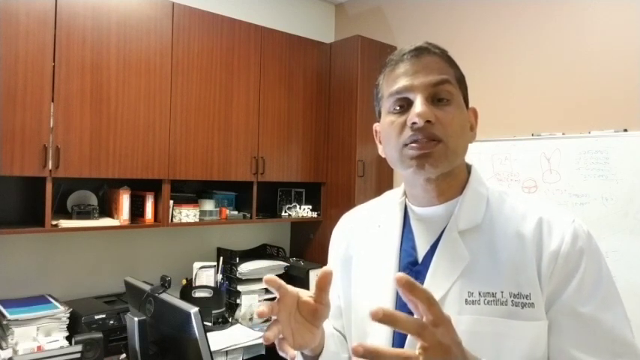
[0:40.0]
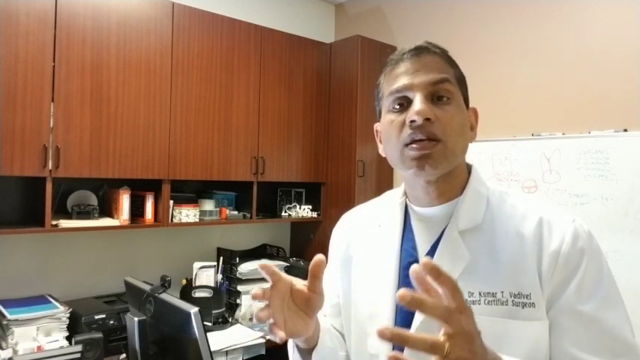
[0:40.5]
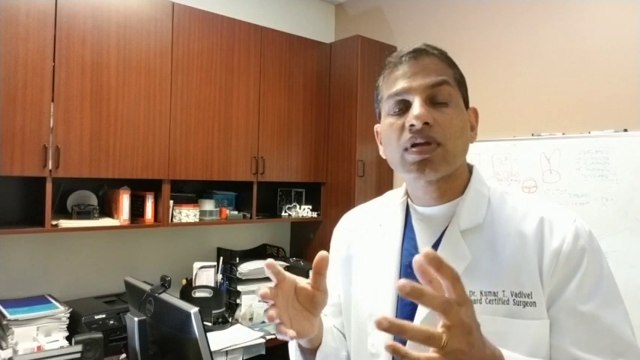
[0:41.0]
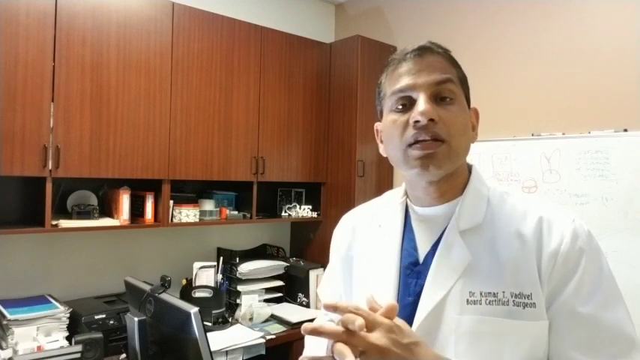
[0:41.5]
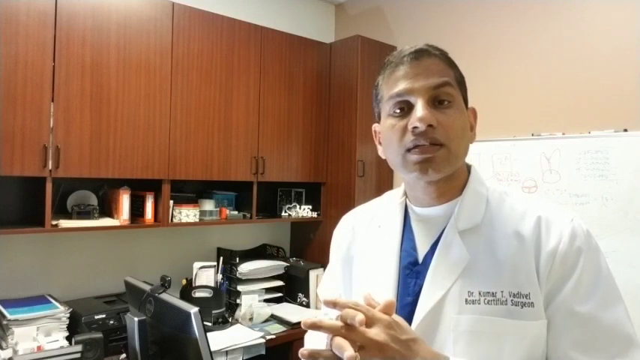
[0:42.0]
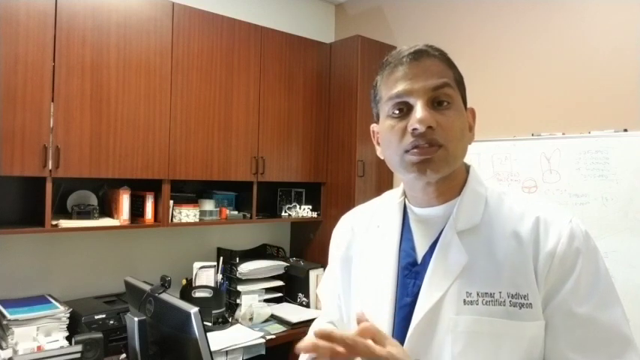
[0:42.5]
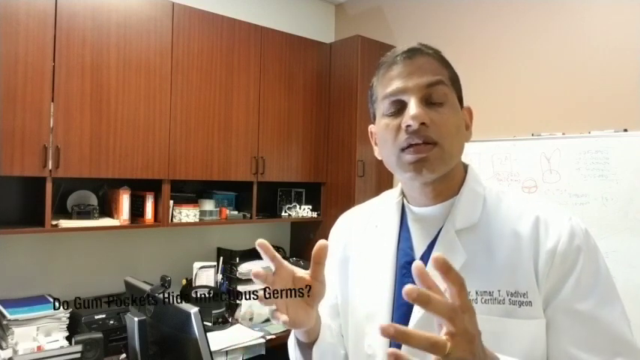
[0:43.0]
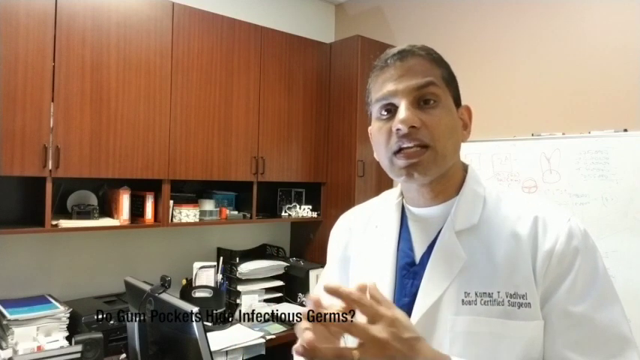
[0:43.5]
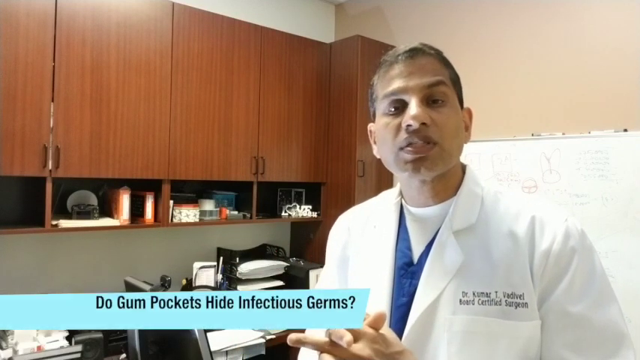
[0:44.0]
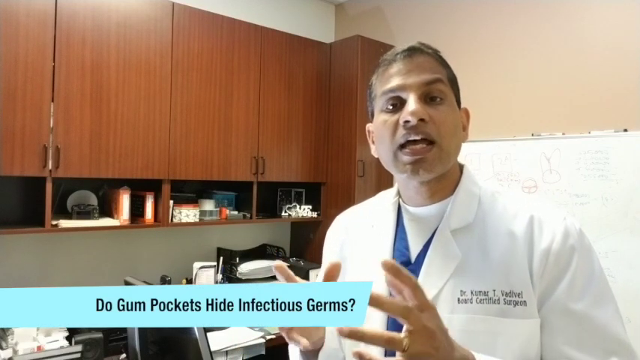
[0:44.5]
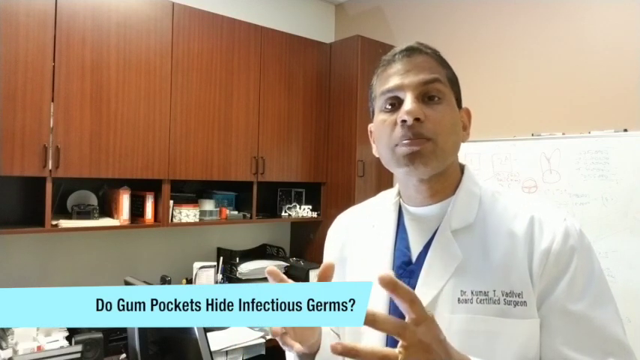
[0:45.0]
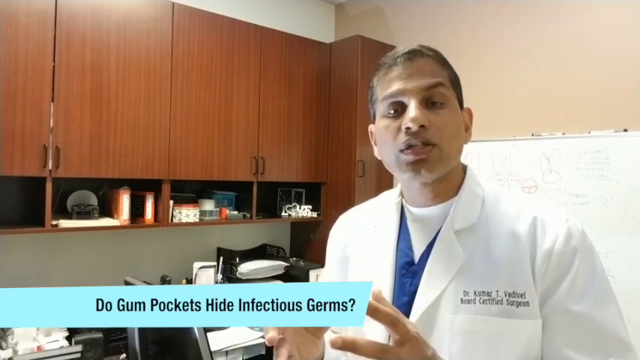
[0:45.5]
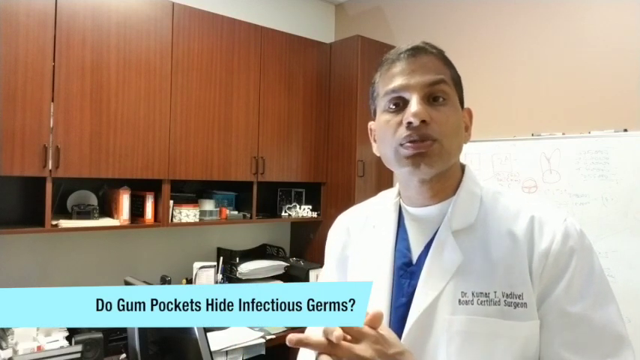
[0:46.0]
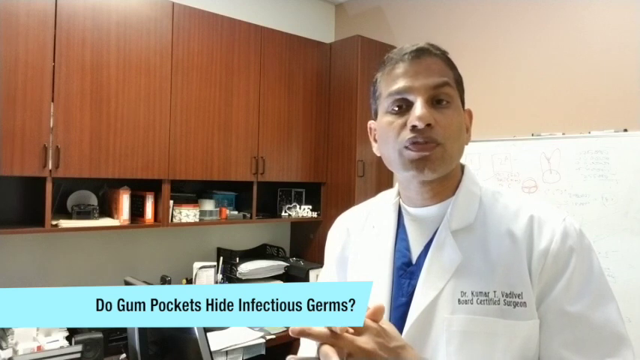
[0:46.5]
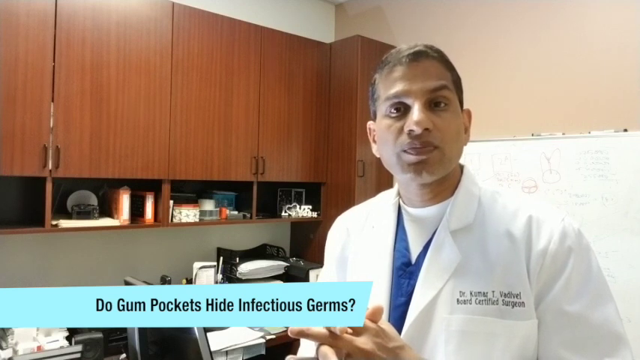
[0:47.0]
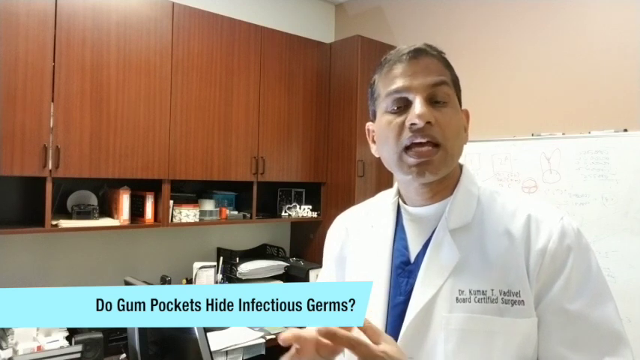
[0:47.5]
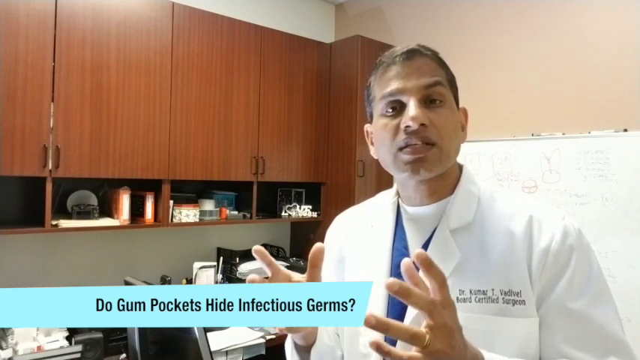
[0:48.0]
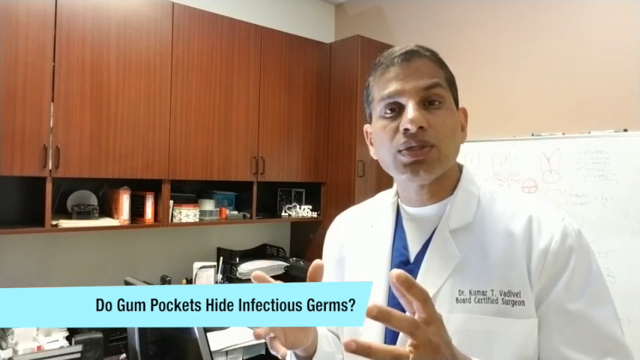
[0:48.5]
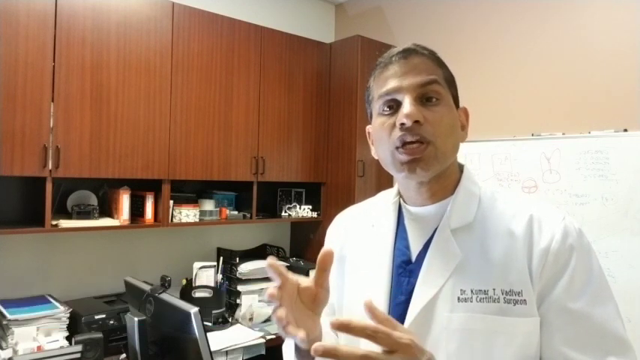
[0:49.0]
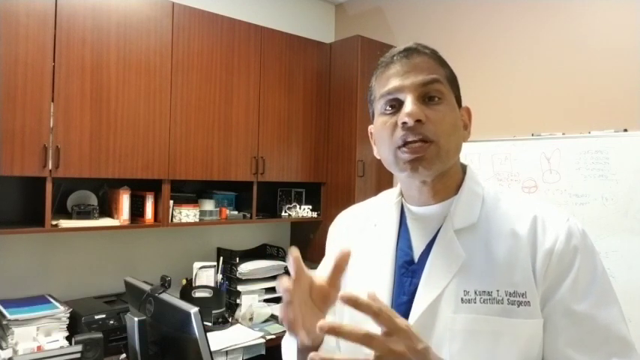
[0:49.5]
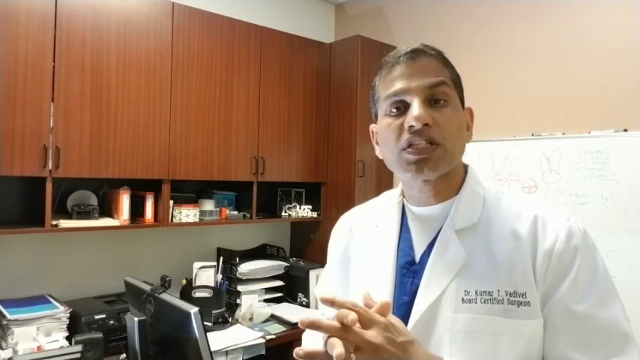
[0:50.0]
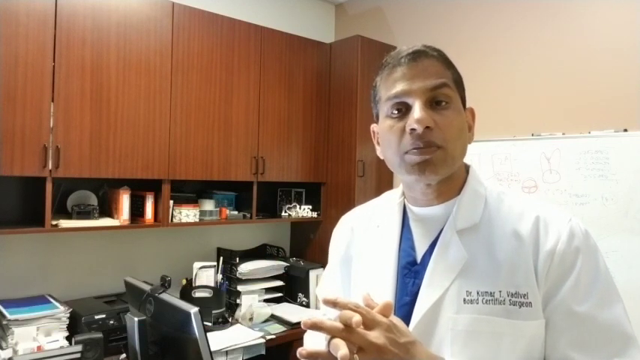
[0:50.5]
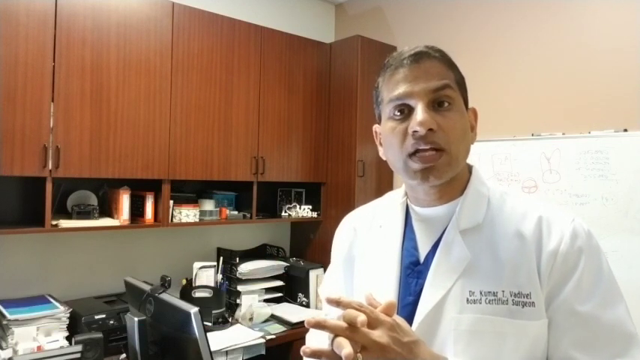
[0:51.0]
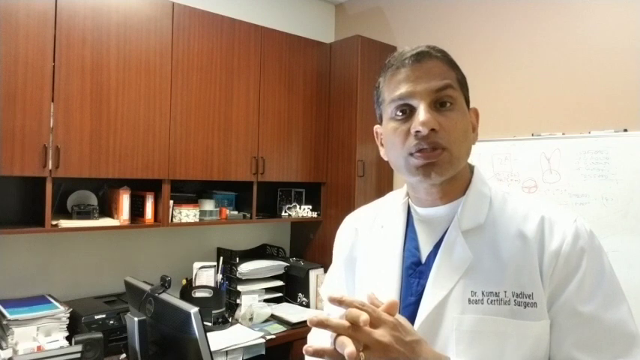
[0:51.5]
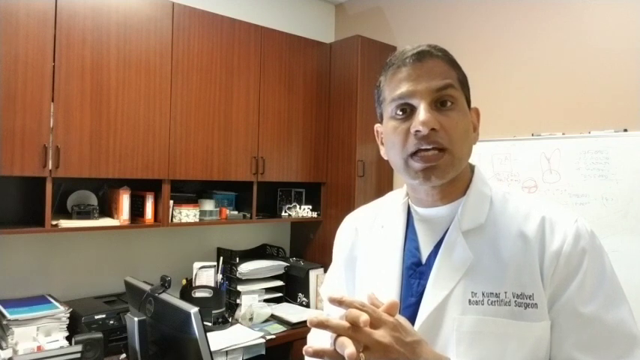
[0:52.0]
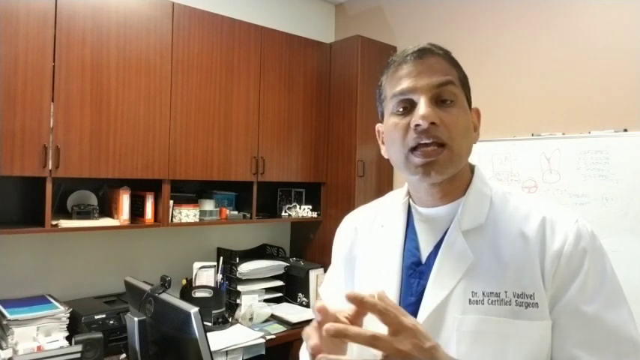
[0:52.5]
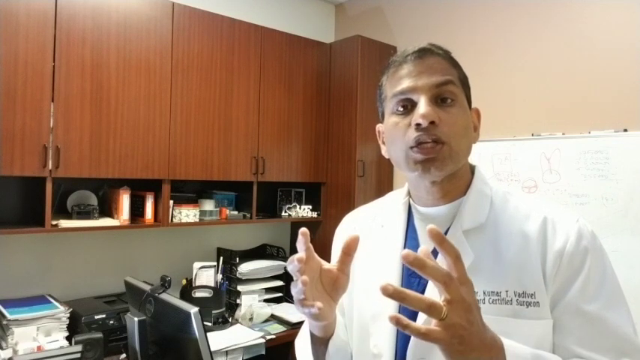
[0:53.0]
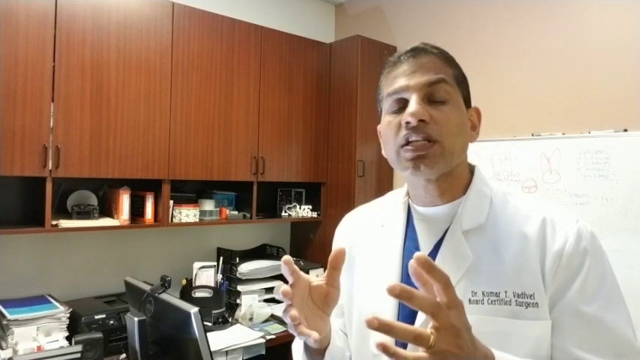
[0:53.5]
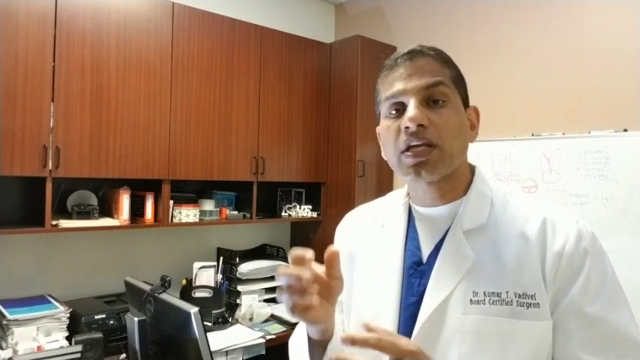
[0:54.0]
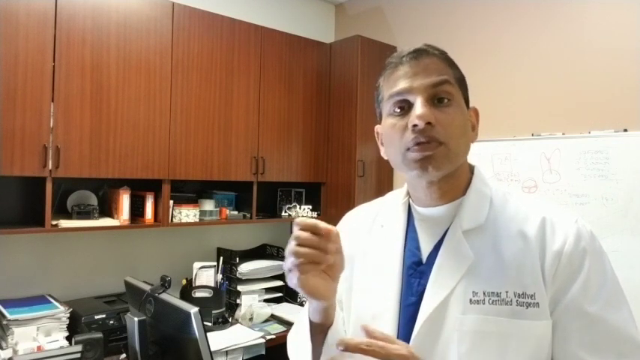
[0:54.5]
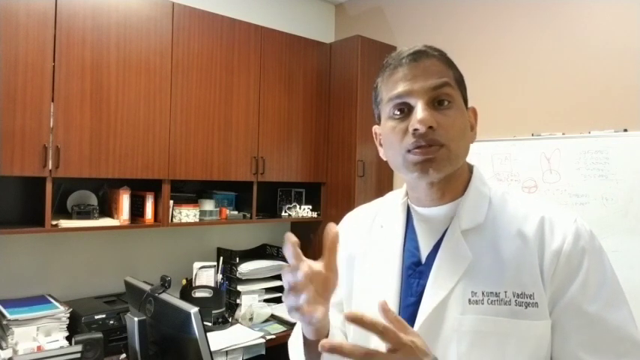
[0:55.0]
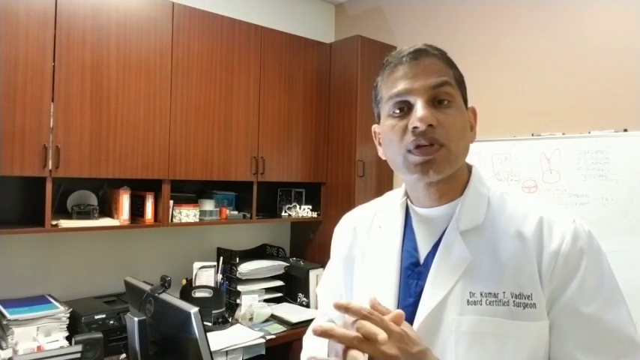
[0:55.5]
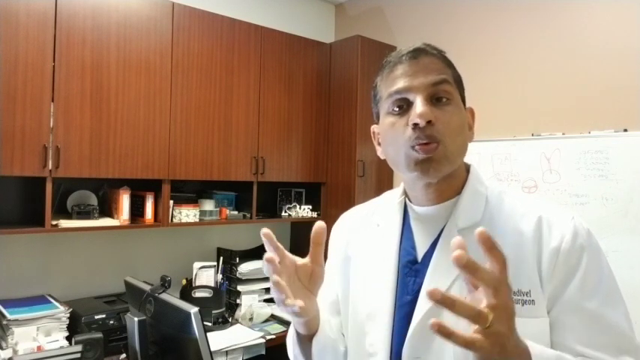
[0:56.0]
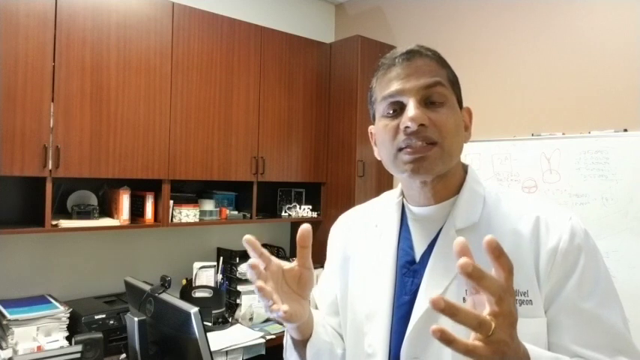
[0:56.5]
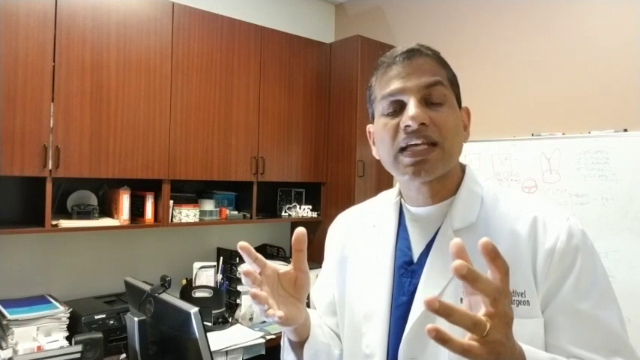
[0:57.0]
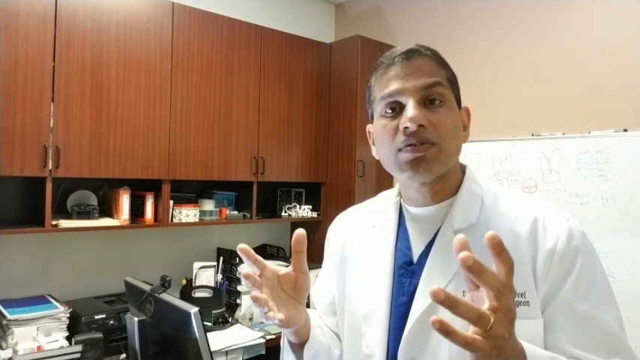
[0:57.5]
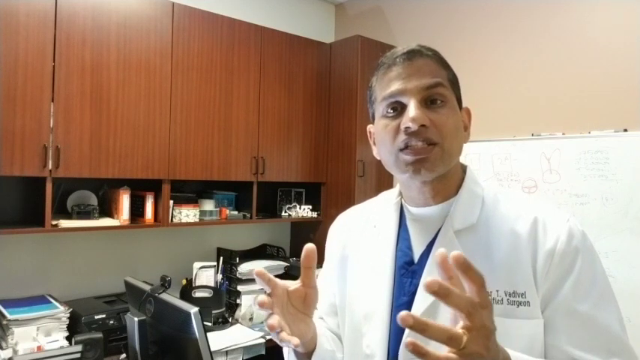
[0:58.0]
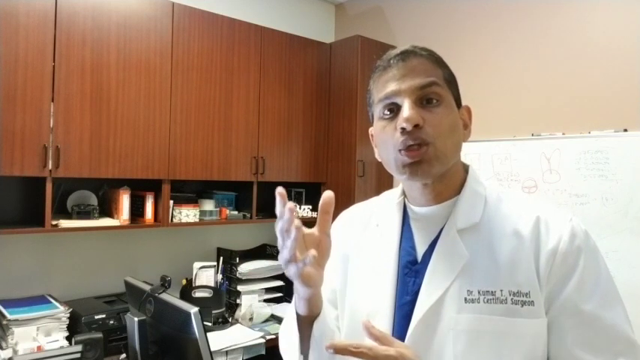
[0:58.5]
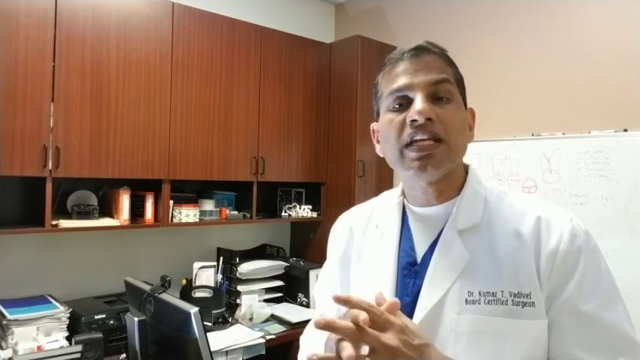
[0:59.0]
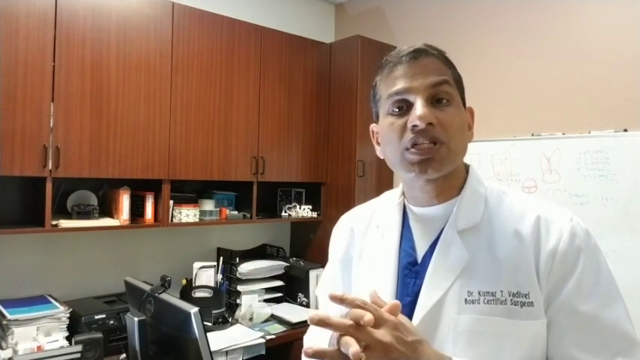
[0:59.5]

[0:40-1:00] A man talks into the camera. He wears a white lab coat with his name embroidered above the left breast pocket, reading "Dr. Kumar T. Vadivel, board certified surgeon". Under the lab coat he wears a blue scrubs top with a white t-shirt under that. As he talks, he keeps his hands clasped, occasionally separating them and then clasping them again as if to emphasize a point. At the bottom left, an animation appears with text scrolling onto the screen that reads "do gum pockets hide infectious germs?", and then a blue background appears behind the text. Dr. Kumar continues to clasp and unclasp his hands, and occasionally raises his right hand higher and gestures with it as if to make a point. In the room there is a whiteboard to the right and behind him, and to the left are brown wood veneer wall cabinets alongside a computer monitor with a webcam and various in and out trays with lots of white paper in them.